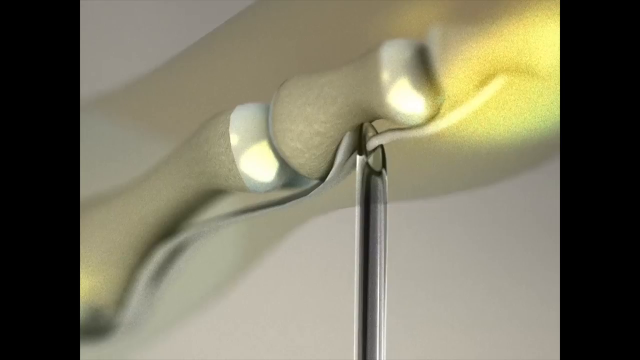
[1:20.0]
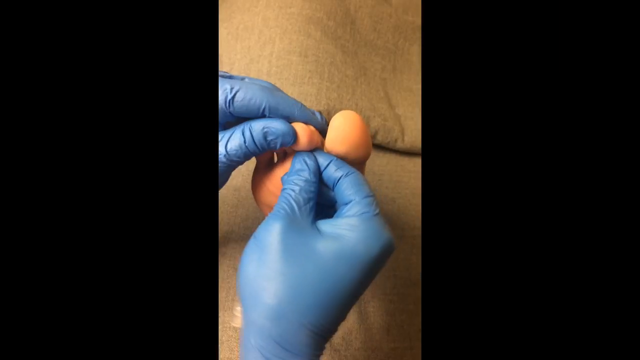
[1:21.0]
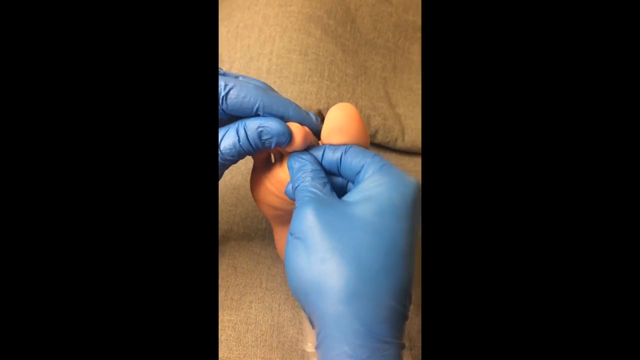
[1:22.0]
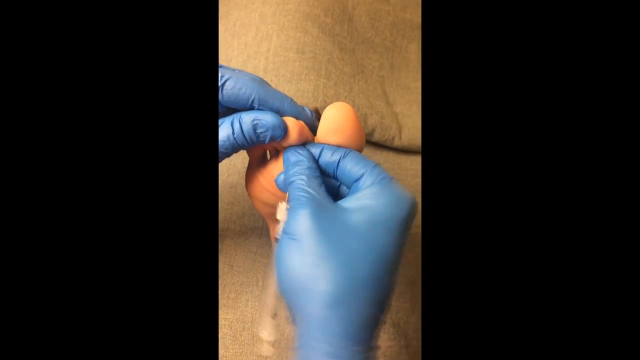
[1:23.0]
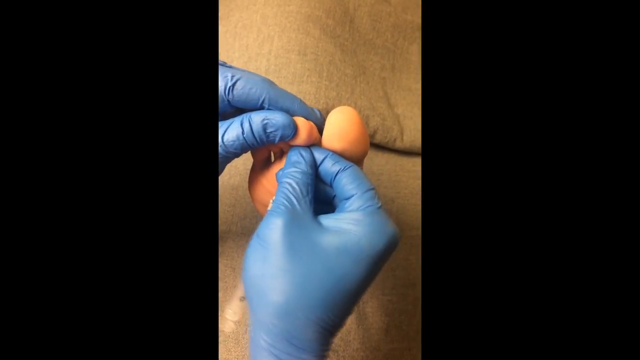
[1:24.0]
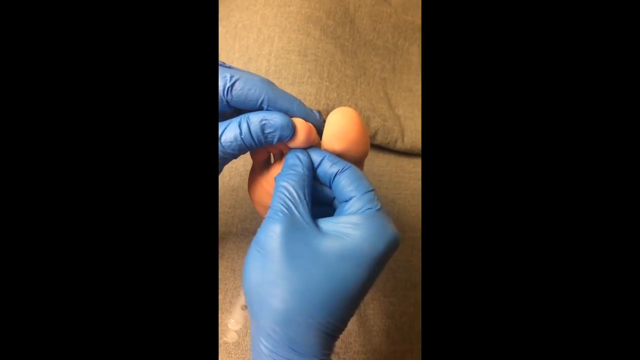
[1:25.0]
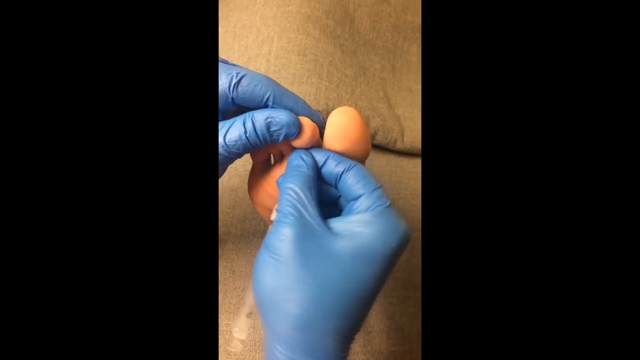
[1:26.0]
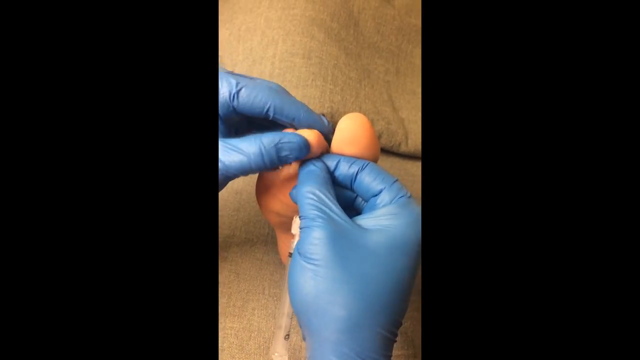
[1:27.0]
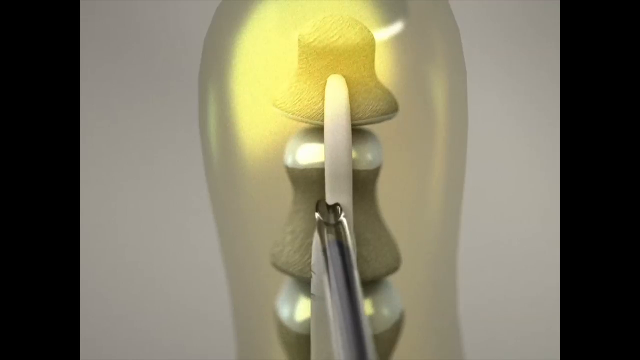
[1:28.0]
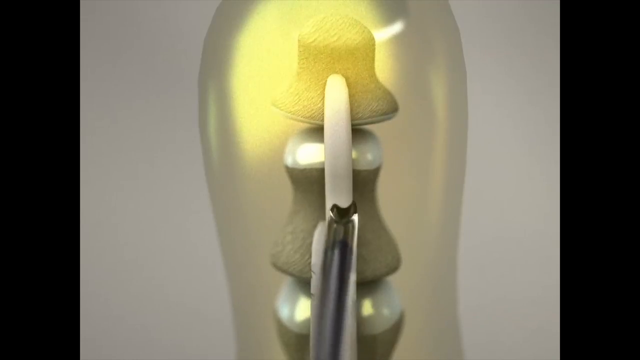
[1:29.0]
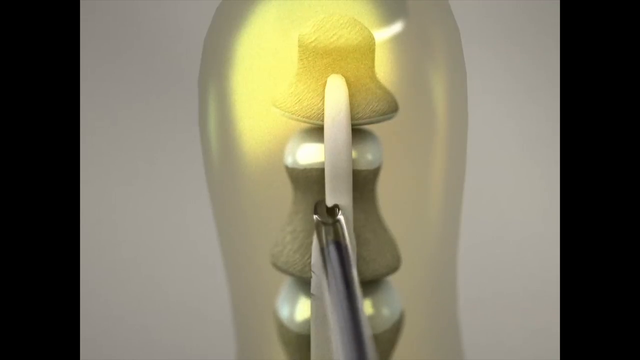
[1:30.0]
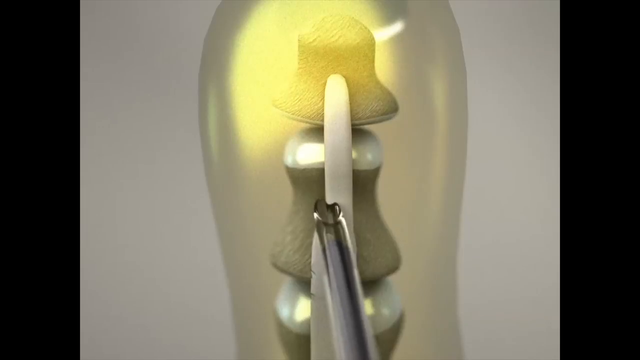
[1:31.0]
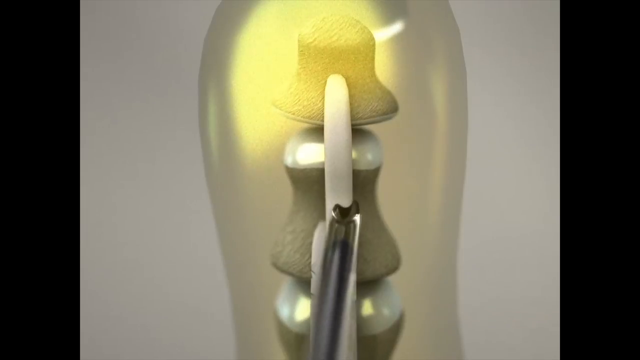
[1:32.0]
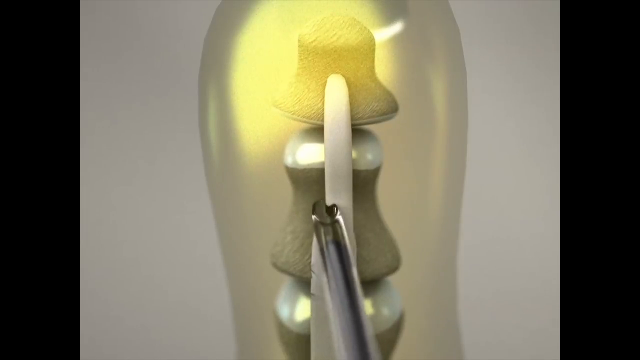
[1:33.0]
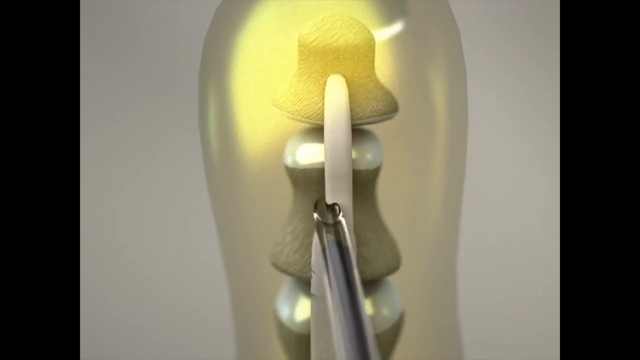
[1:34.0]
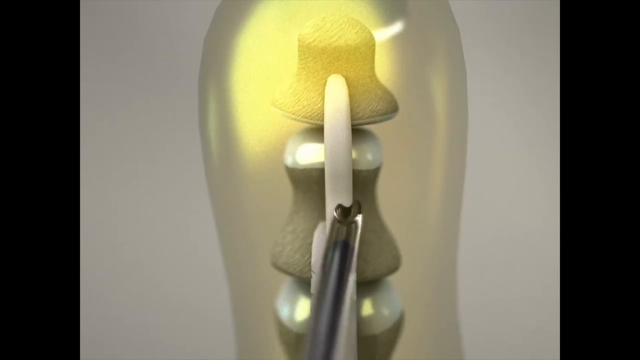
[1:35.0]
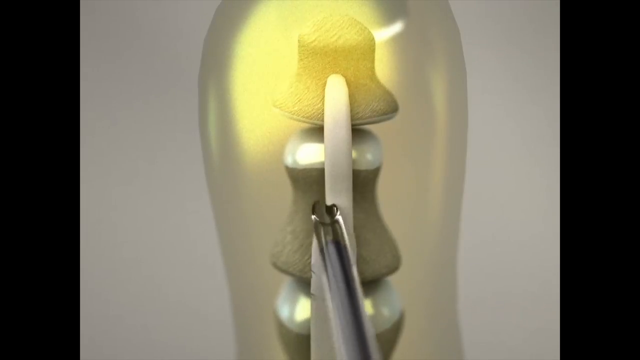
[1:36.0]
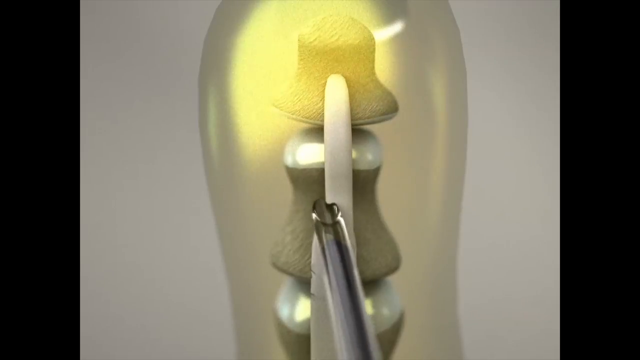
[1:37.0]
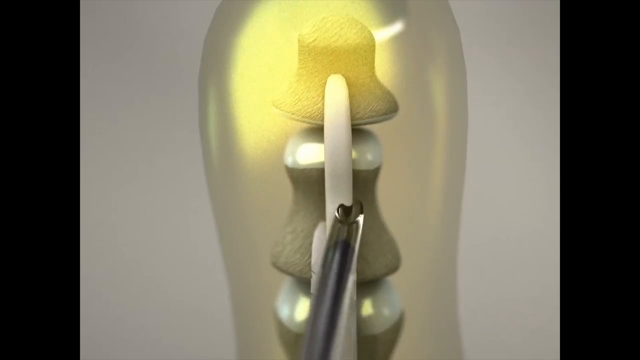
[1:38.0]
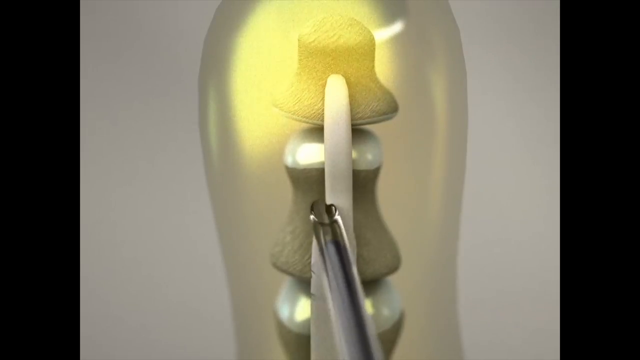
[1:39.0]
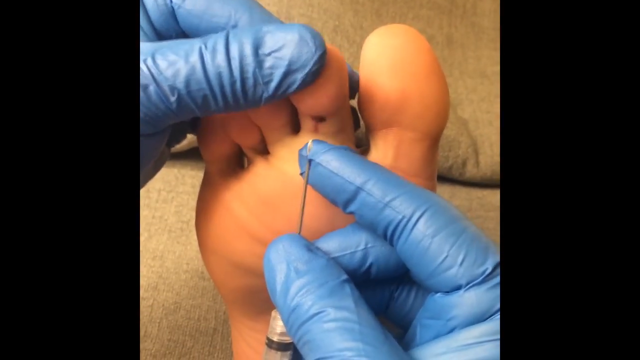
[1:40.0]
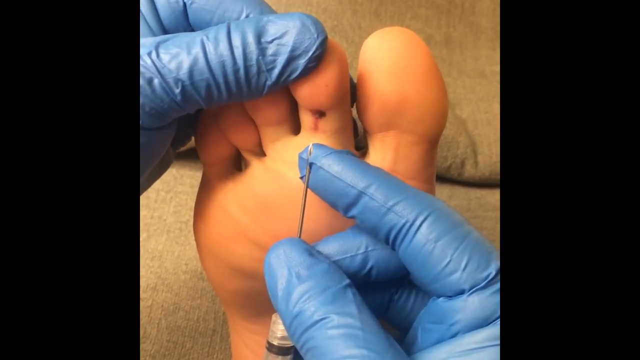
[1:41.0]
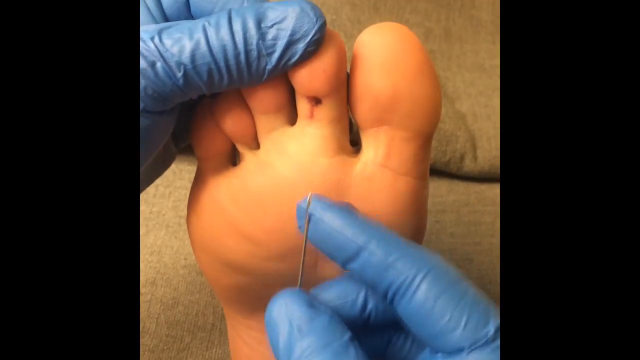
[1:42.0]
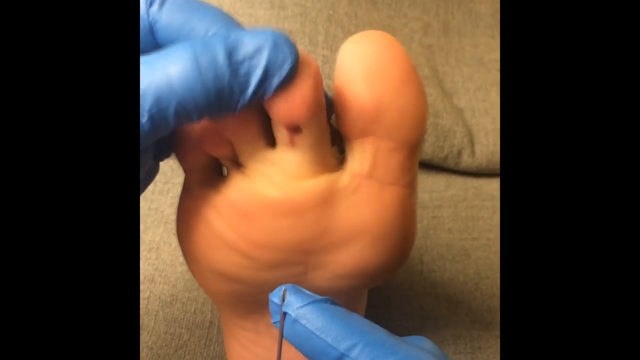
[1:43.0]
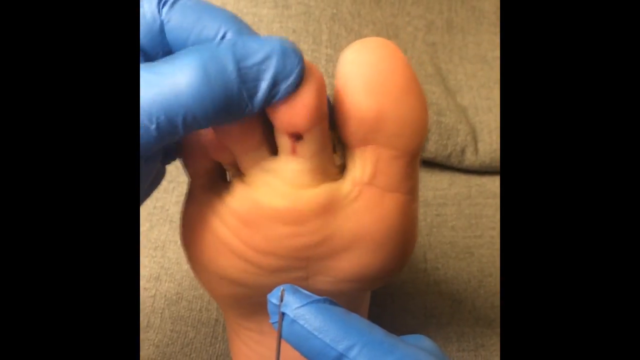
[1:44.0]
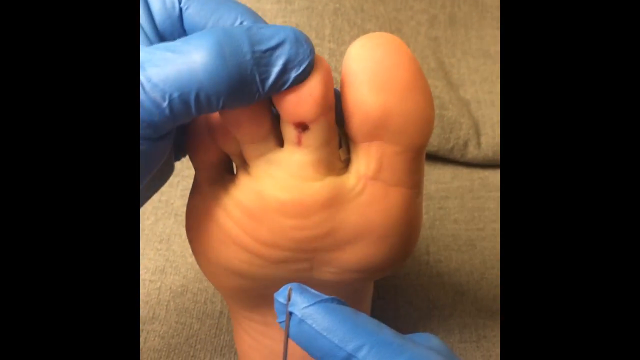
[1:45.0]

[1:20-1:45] The doctor puts the needle a short way into the patient's foot, holding the metal part of the needle with a blue-gloved hand and moving it back and forth. The video then goes to an x-ray-like or digital image showing the needle going back and forth by a white piece. The yellow top of the toe is visible with the different bones inside it, and the joints are white. The needle is shown cutting through the white part, moving back and forth almost like a windshield wiper, and it continues to move back and forth. Then there is a view of the second toe after the doctor takes the needle out and pushes the toe back and forth, with a red dot on the toe where the needle went in.